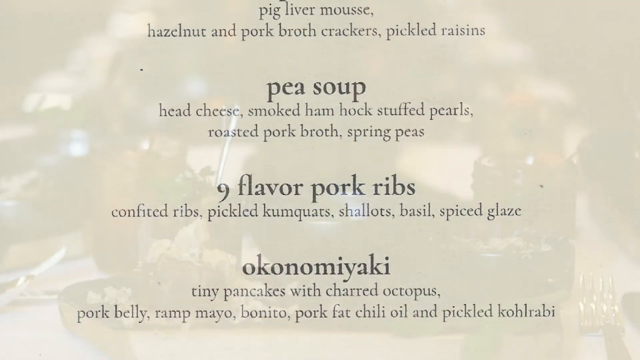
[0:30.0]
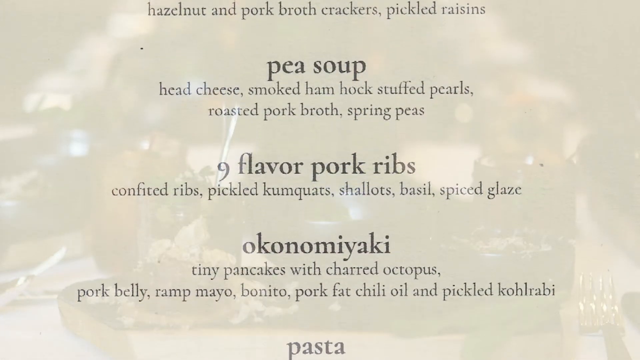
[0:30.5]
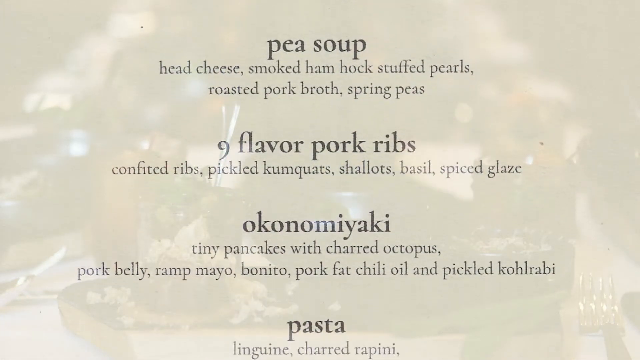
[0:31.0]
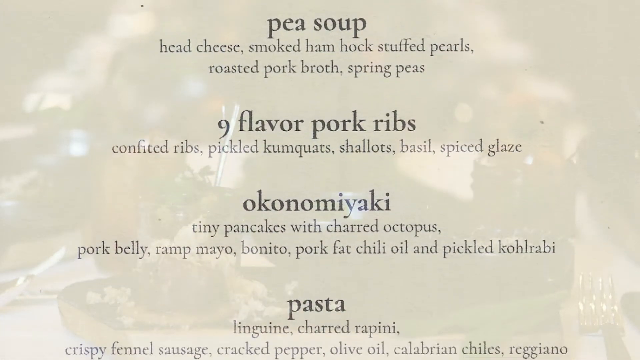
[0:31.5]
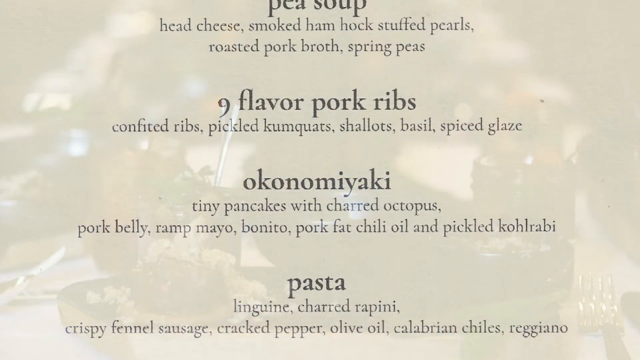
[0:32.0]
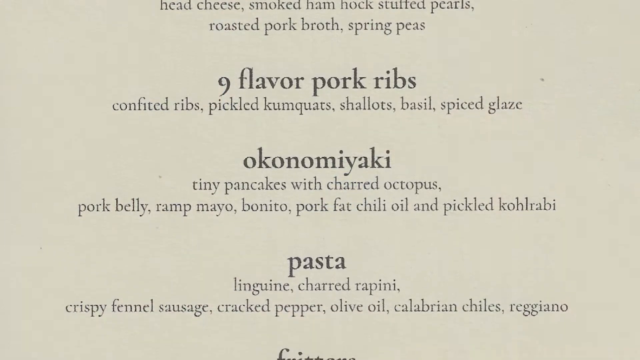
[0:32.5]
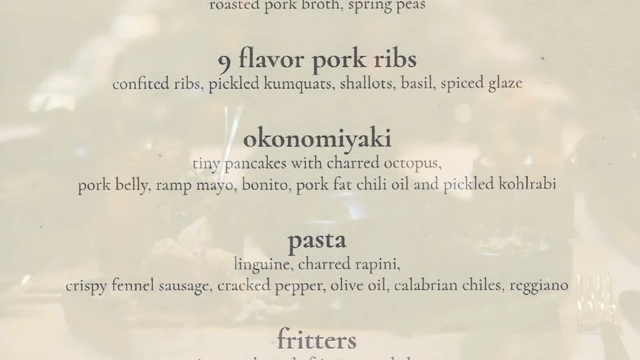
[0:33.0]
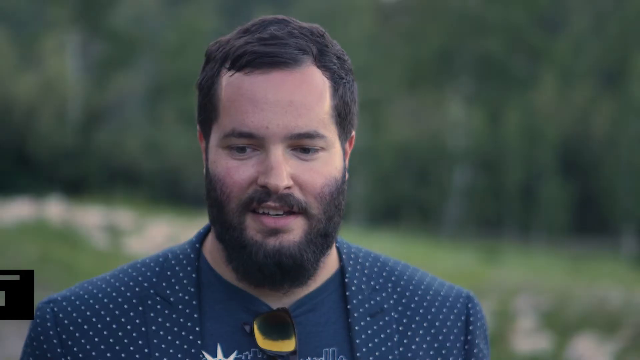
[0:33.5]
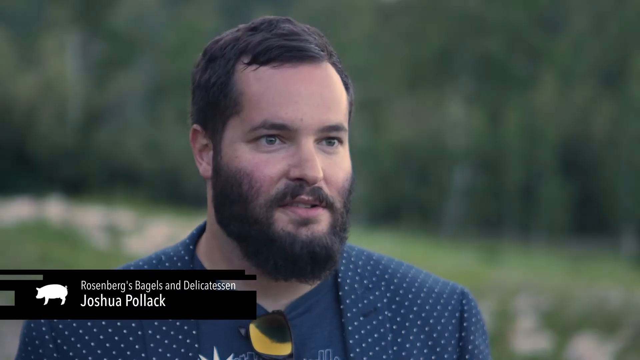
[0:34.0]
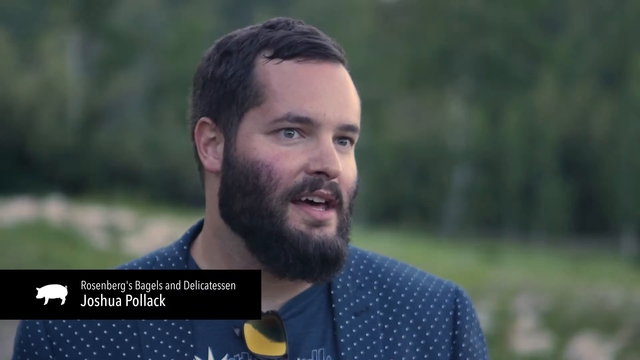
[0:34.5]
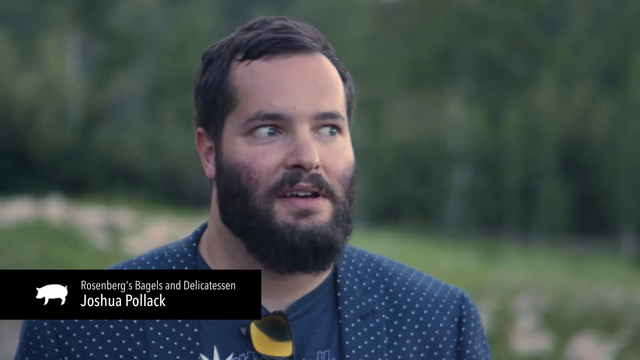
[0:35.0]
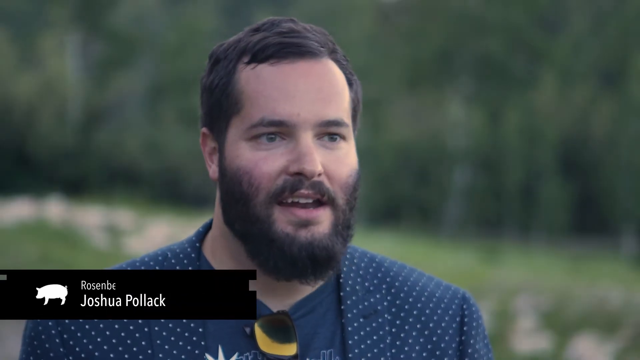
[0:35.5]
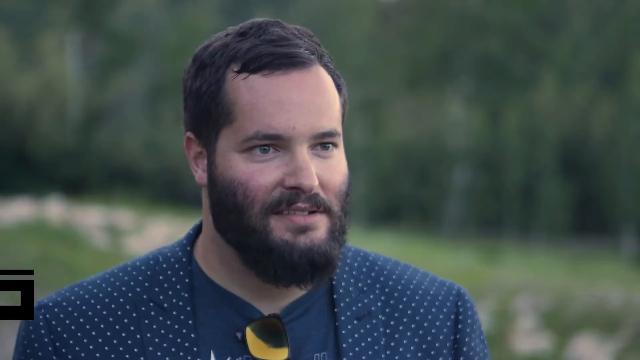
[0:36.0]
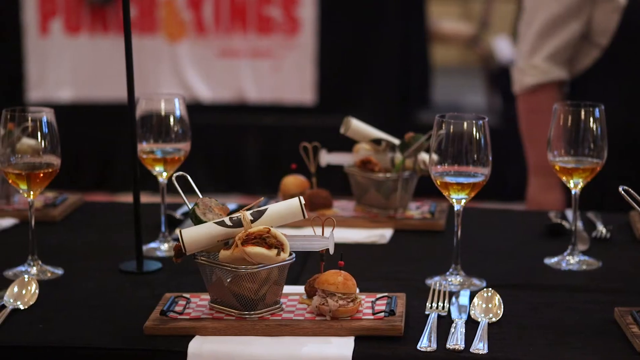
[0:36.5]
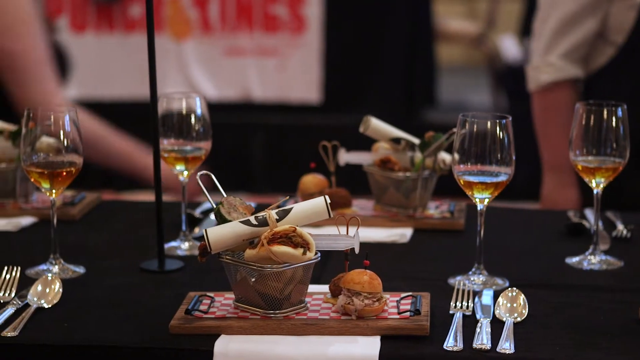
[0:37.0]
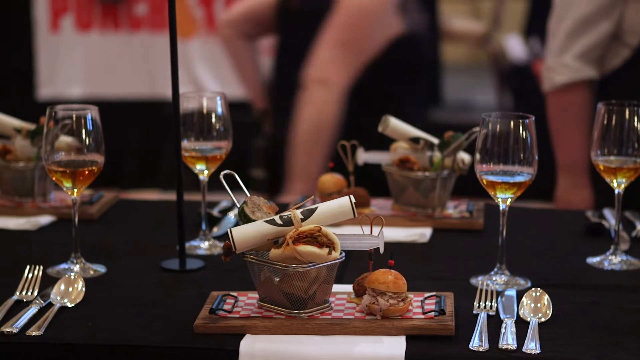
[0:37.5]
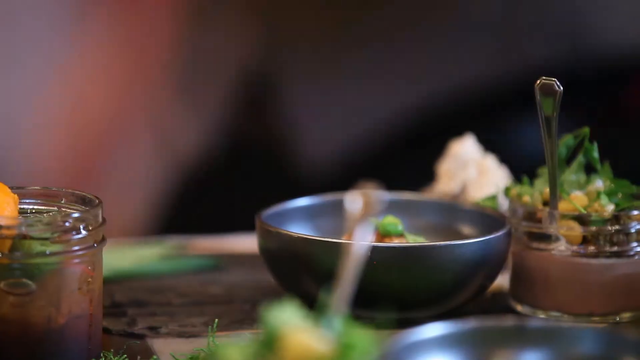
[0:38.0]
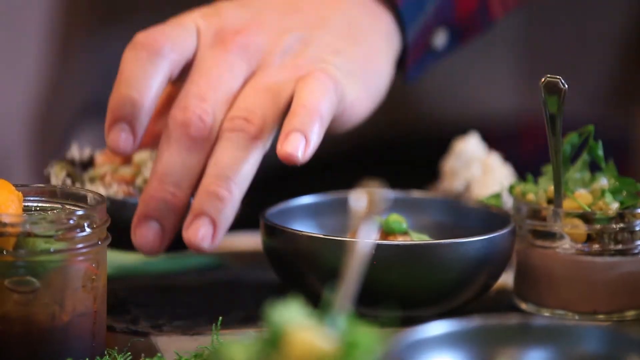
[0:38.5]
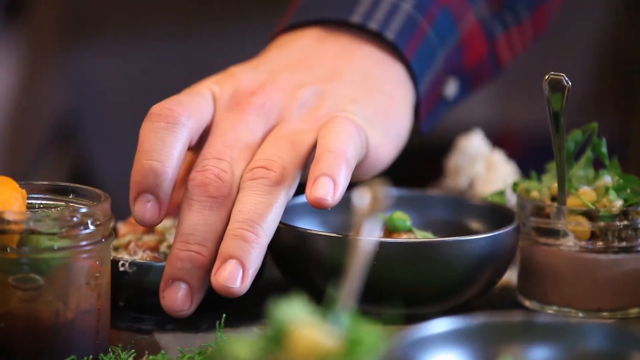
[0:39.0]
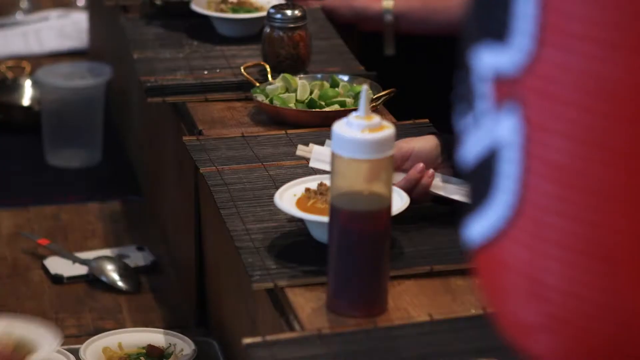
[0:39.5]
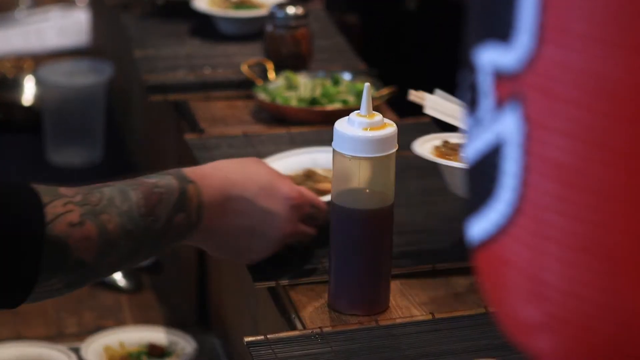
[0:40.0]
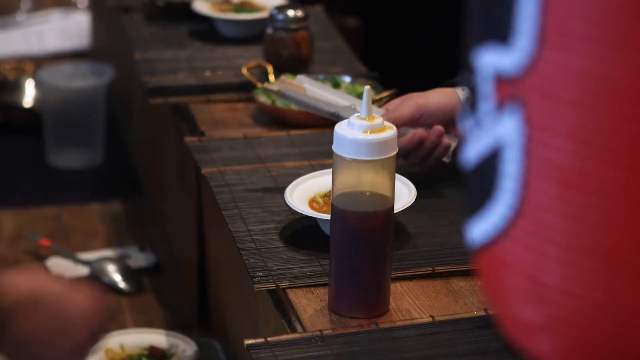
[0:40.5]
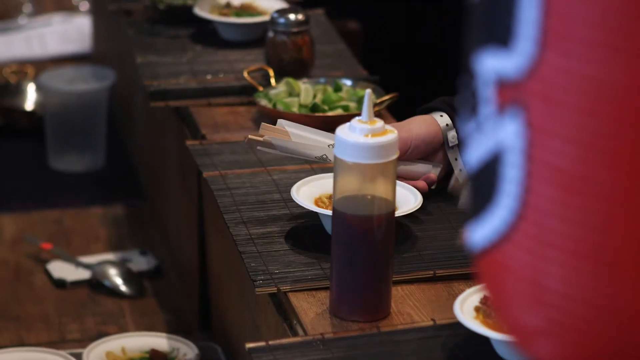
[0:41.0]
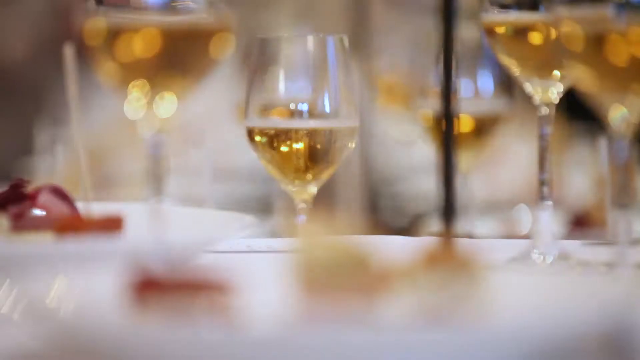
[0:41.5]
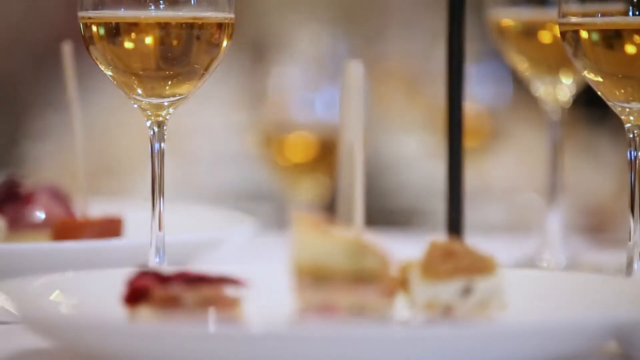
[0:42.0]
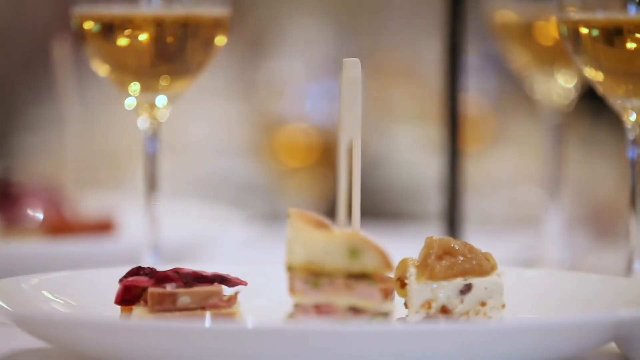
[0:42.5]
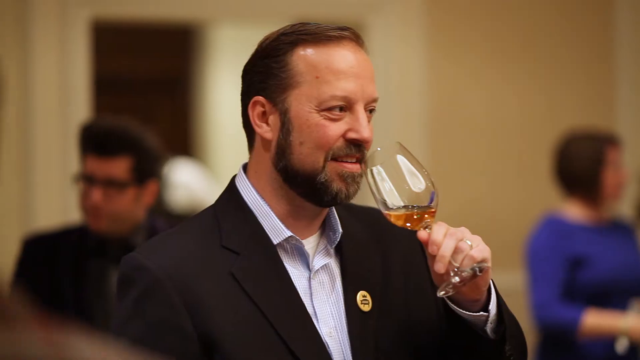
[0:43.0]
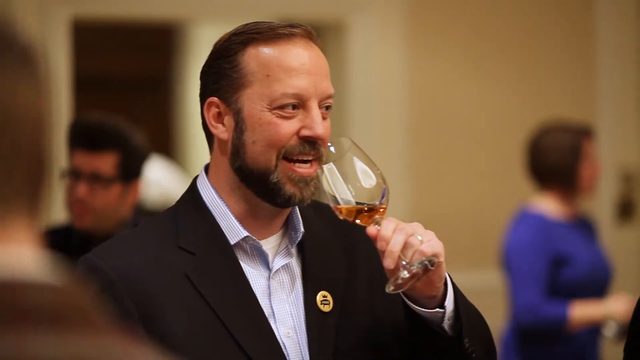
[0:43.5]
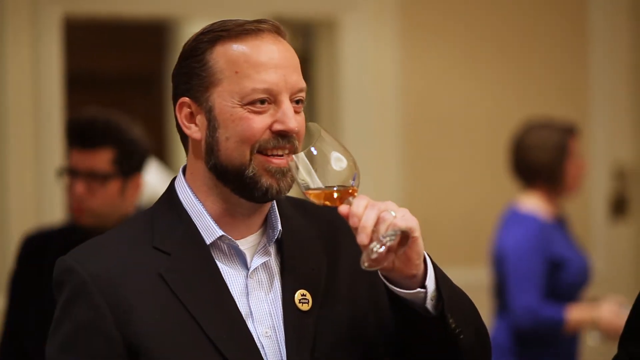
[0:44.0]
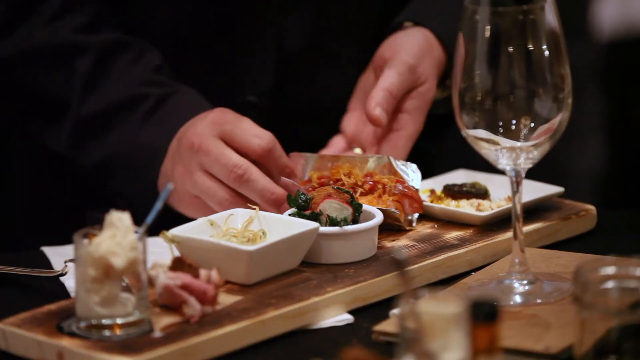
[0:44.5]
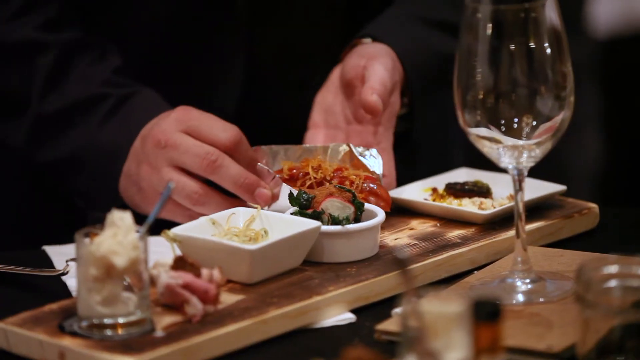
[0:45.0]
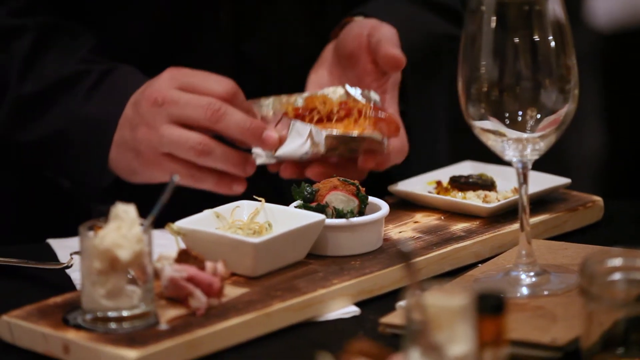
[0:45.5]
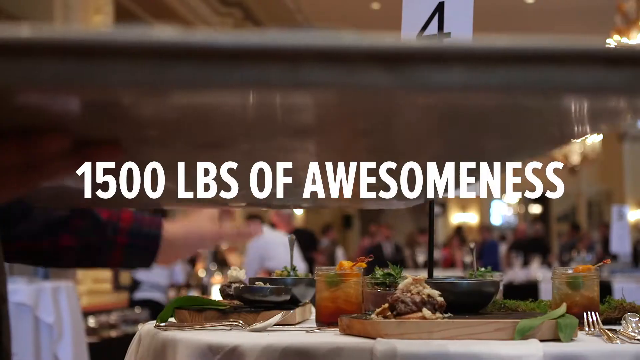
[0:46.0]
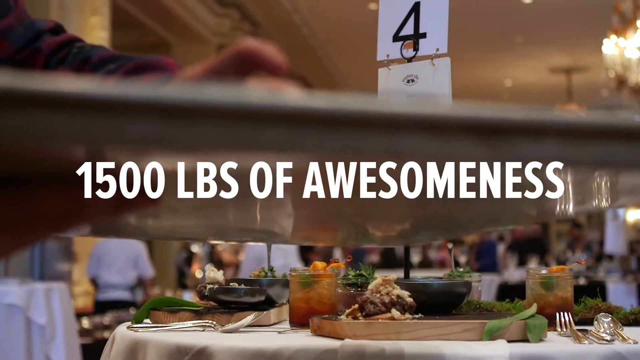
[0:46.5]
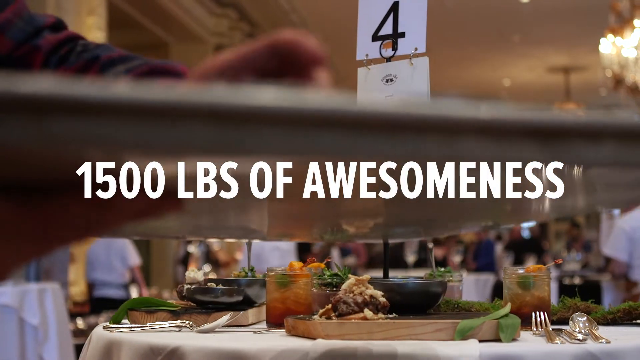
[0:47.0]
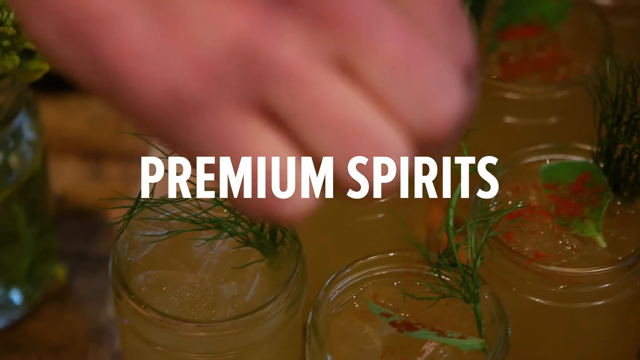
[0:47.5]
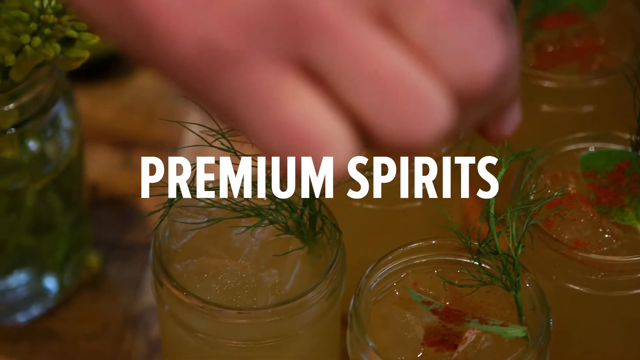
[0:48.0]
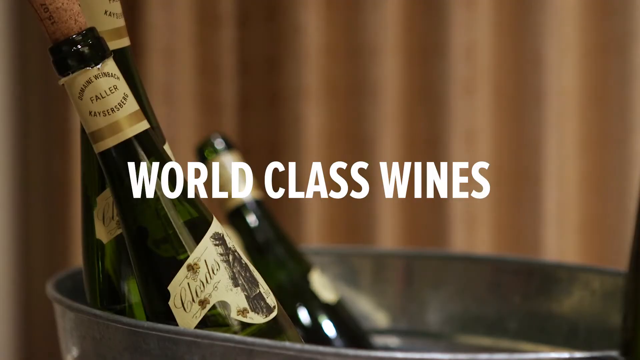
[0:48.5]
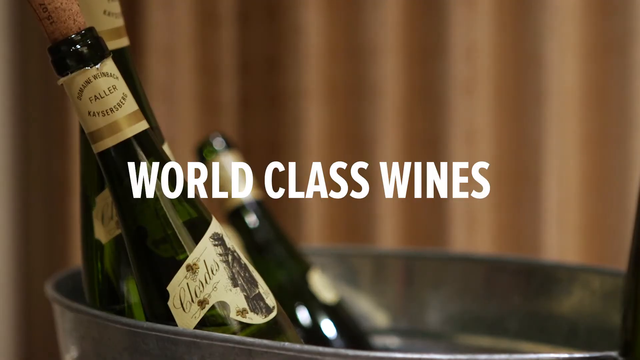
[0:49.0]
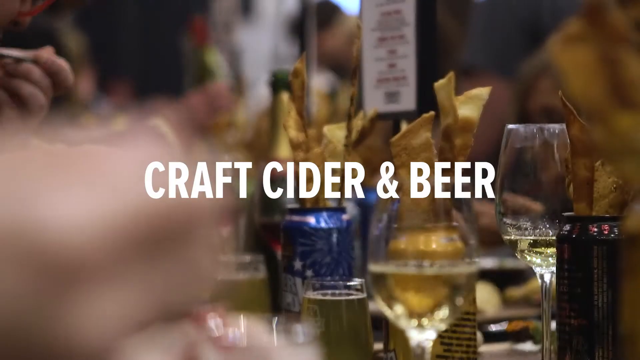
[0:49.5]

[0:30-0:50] A list of dishes to be served appears: pig liver mousse, hazelnut and pork broth crackers, pickled raisins, pea soup, head cheese, smoked ham, hog, saffron pearls, roasted pork broth, spring peas, nine-flavored pork ribs, confited ribs, pickled kumquats, shallots, basil, spiced glaze, okonomiyaki, tiny pancakes with charred octopus, pork belly, ramp mayo, bonito, pork fat, chili oil and picked kohlrabi. A pasta section lists linguine, charred rapini, crispy fennel sausage, cracked pepper, olive oil, calabrian chilies and reggiano. There is a glimpse of a man named Joshua Polak, with Rosenberg bagels shown. A table is full of glasses filled with alcohol, and people exchange small cups of food. More glasses of alcohol appear, and people drink from them, then seem to be pouting. The text reads "1,500 pounds of awesomeness, premium spirits, world-class wines, craft cider and beer," followed by "www.churchon555.com."